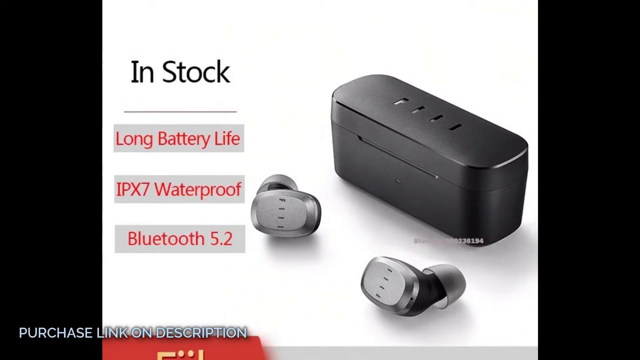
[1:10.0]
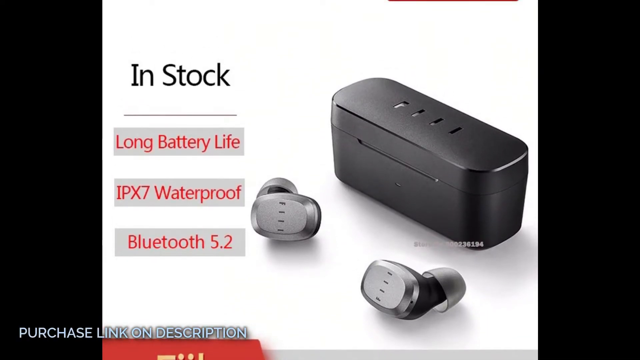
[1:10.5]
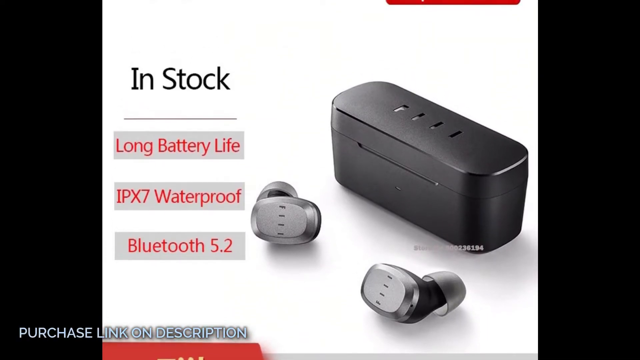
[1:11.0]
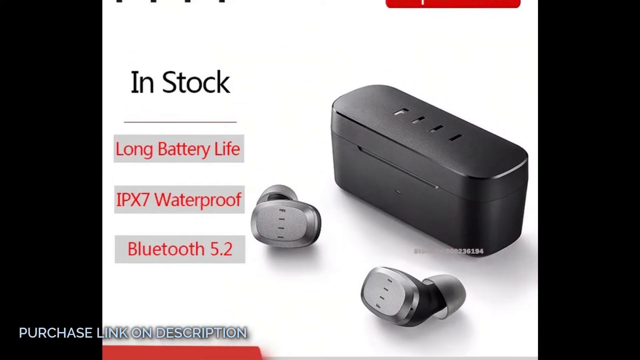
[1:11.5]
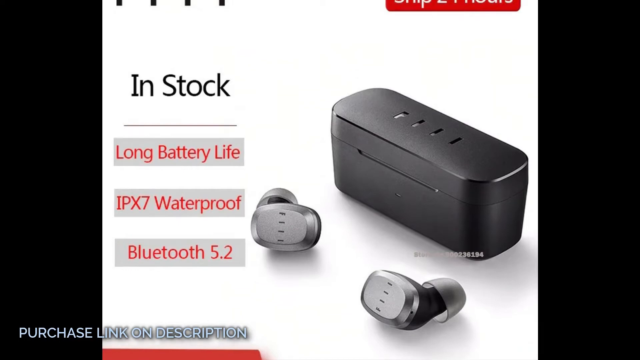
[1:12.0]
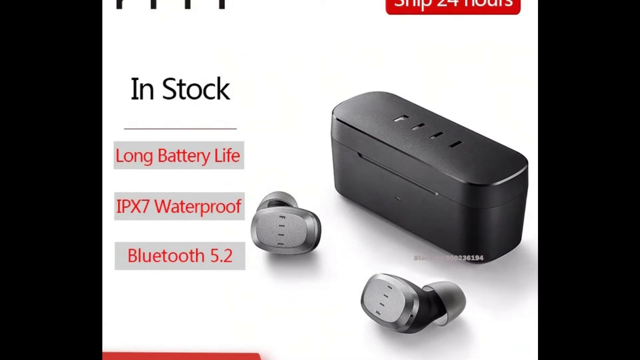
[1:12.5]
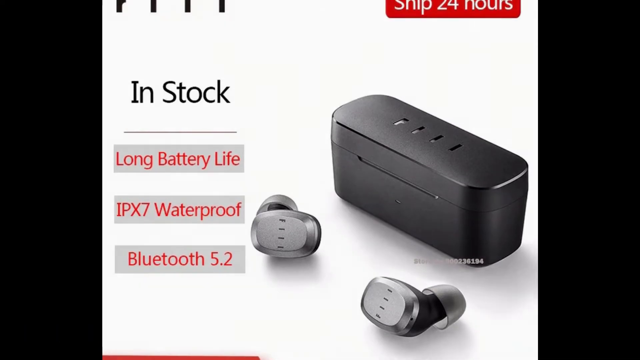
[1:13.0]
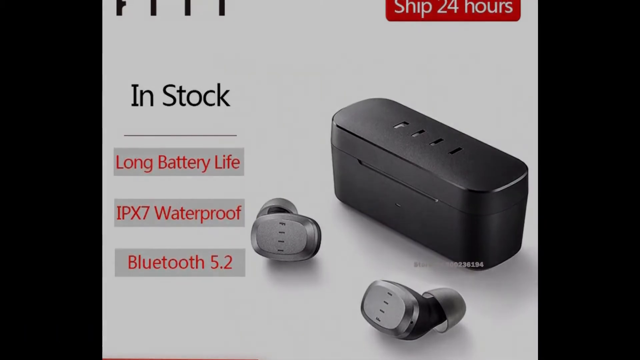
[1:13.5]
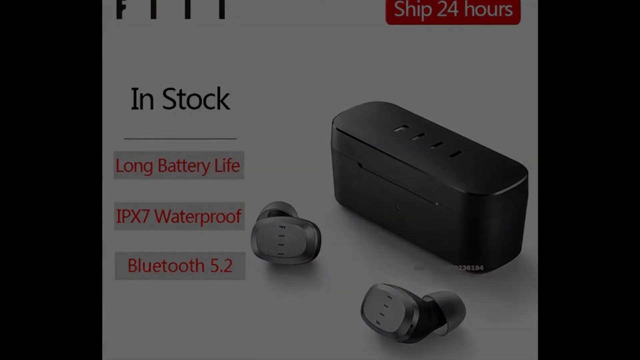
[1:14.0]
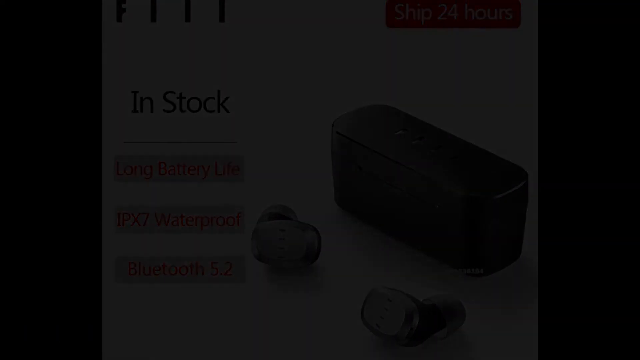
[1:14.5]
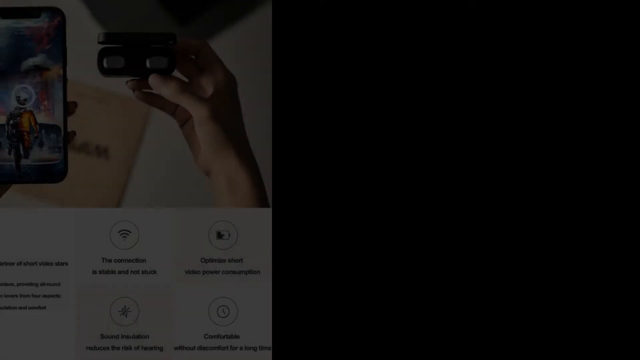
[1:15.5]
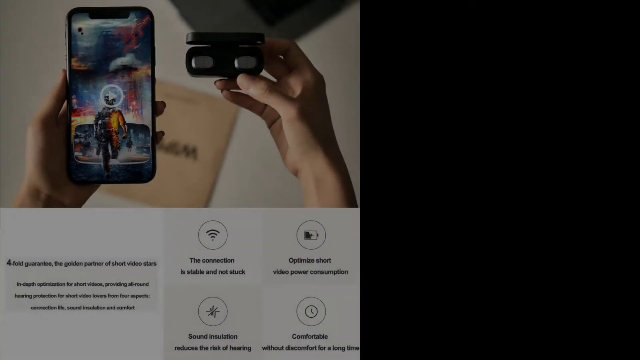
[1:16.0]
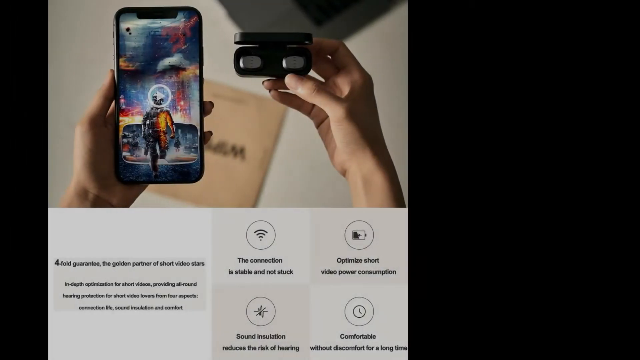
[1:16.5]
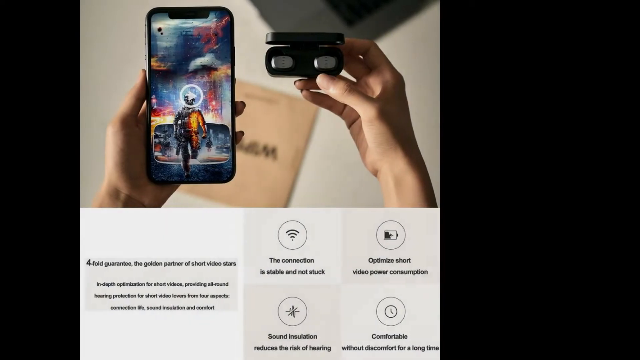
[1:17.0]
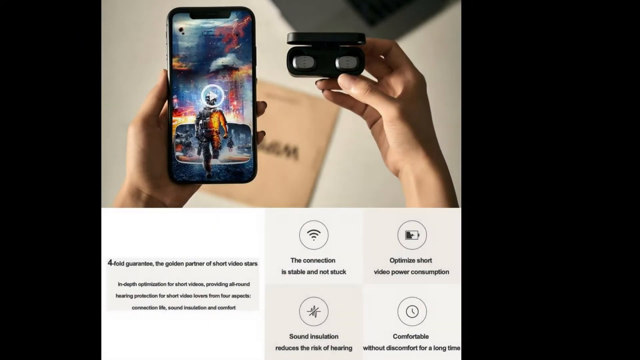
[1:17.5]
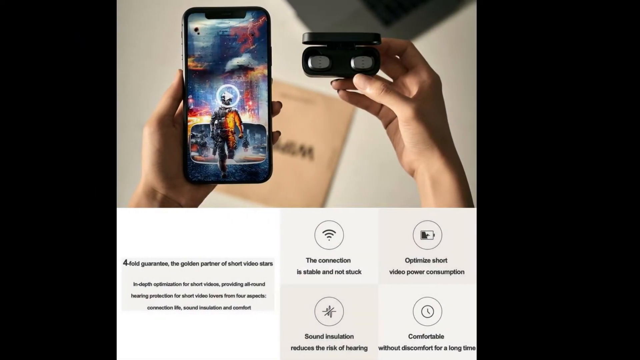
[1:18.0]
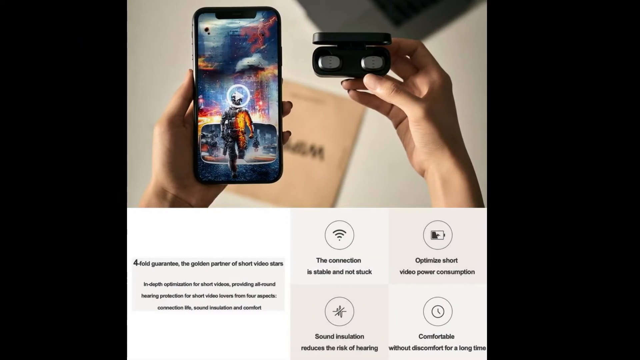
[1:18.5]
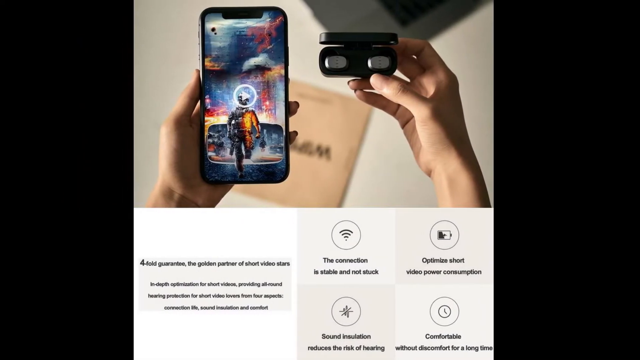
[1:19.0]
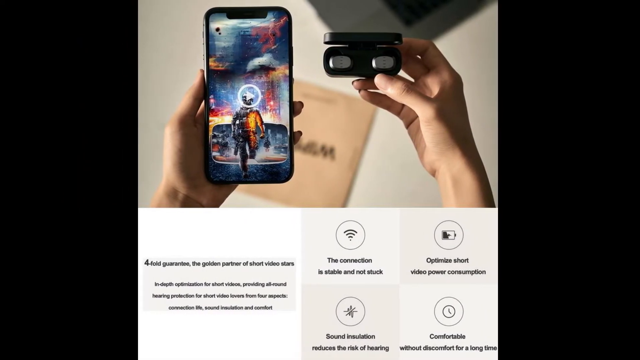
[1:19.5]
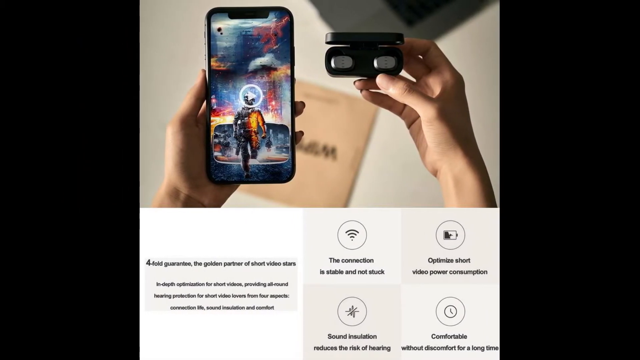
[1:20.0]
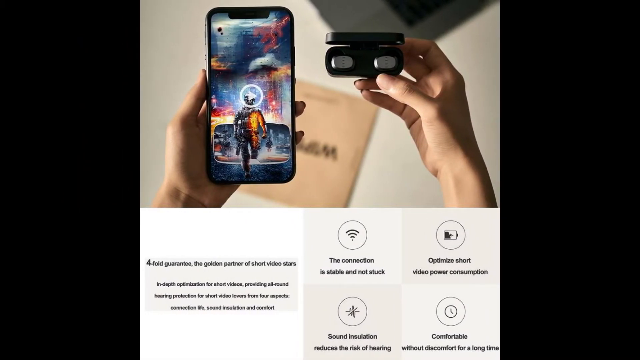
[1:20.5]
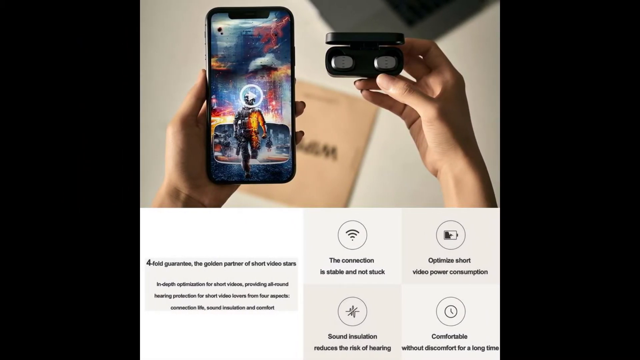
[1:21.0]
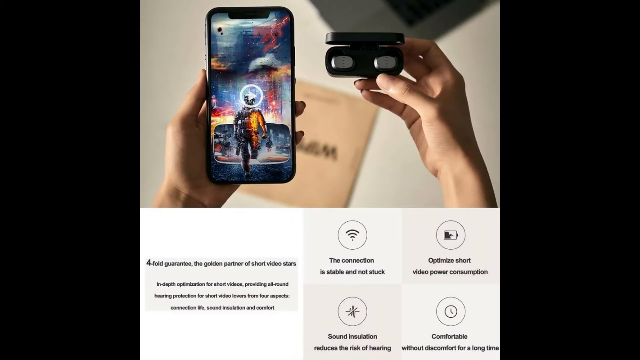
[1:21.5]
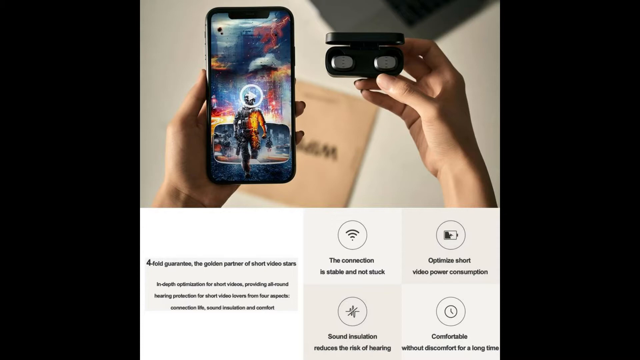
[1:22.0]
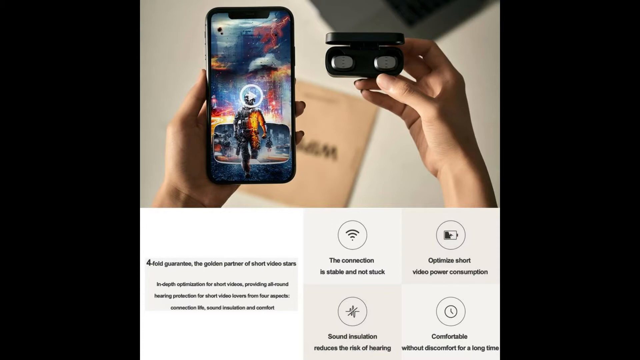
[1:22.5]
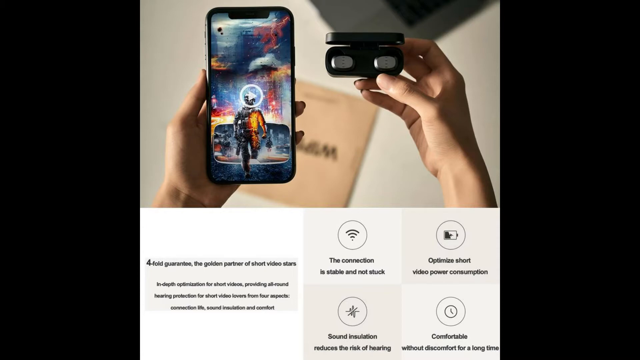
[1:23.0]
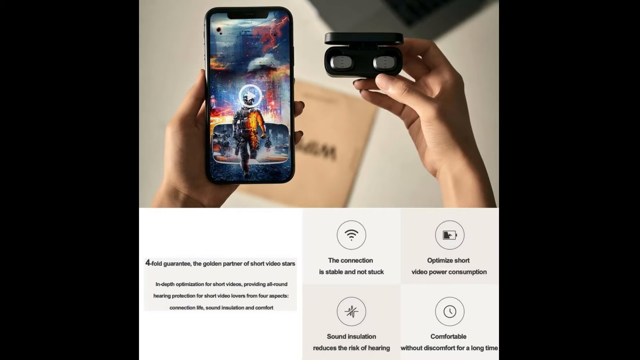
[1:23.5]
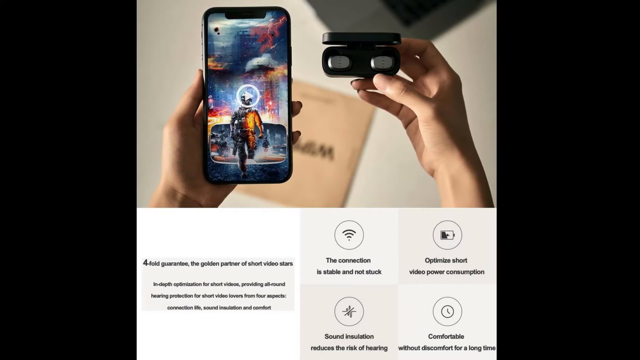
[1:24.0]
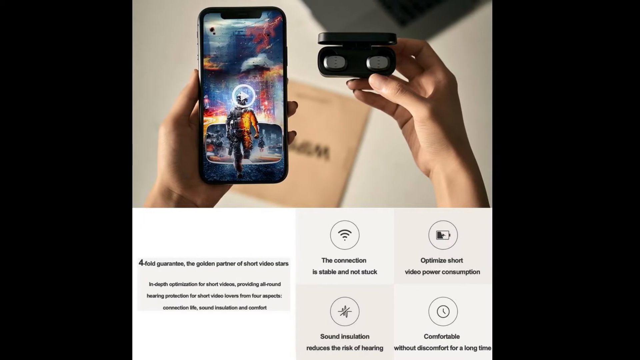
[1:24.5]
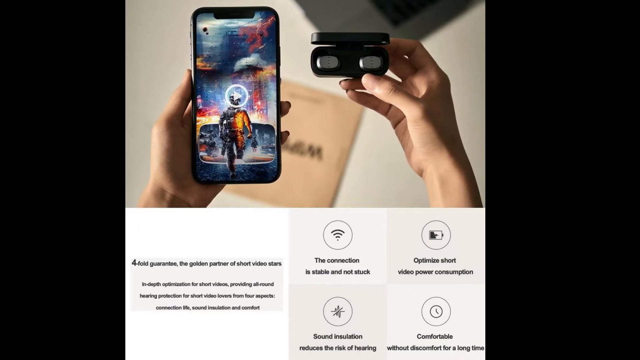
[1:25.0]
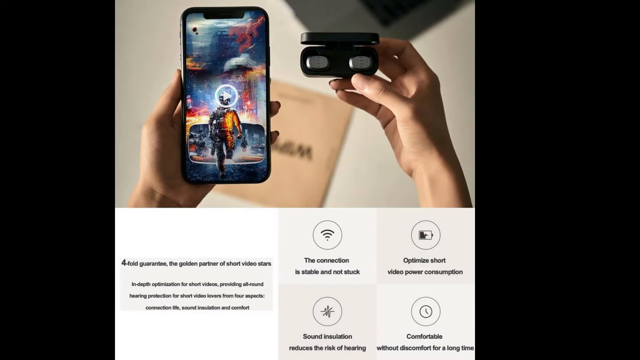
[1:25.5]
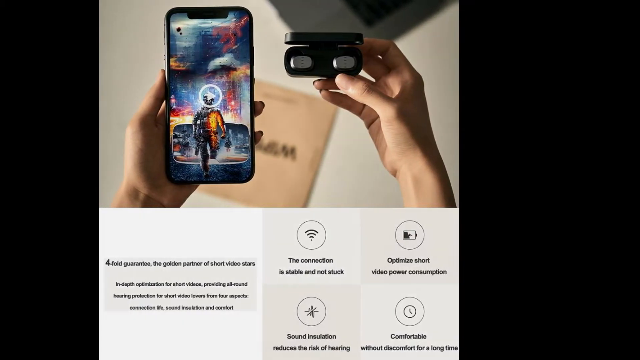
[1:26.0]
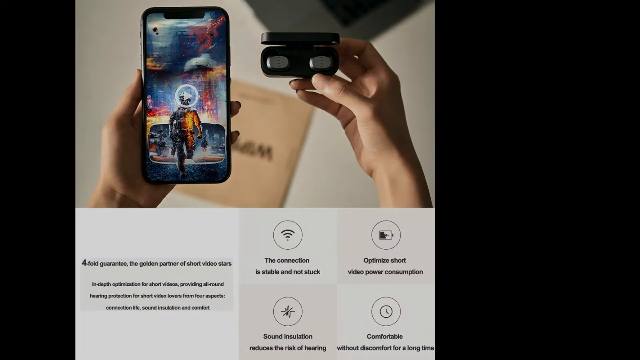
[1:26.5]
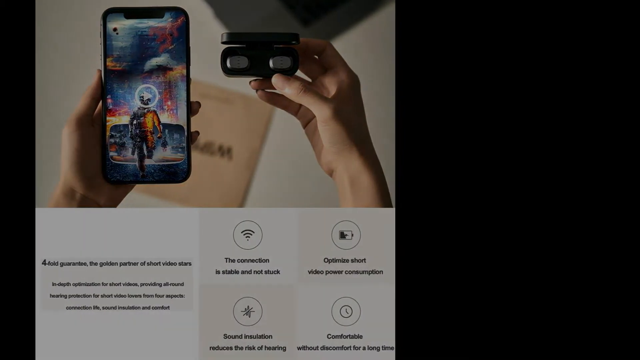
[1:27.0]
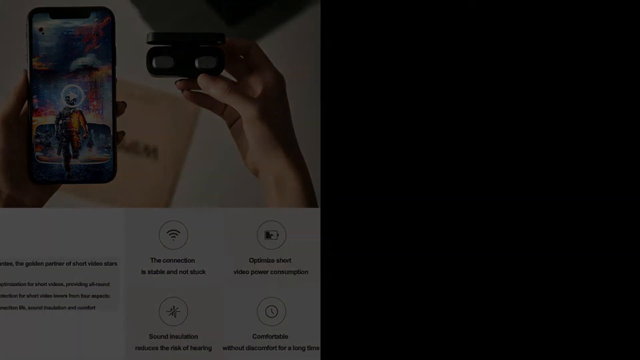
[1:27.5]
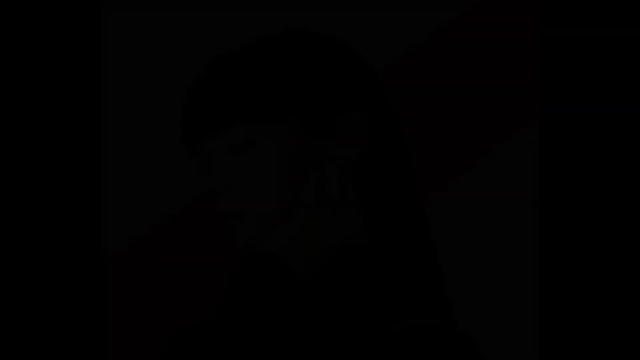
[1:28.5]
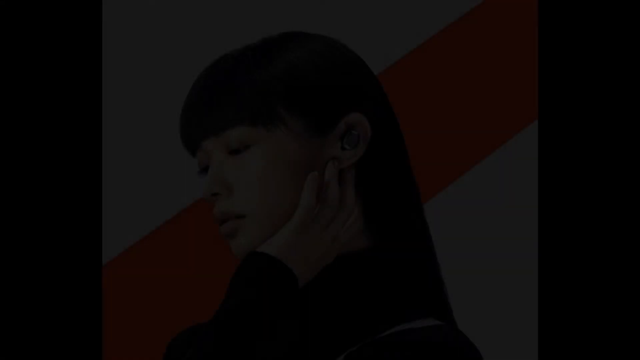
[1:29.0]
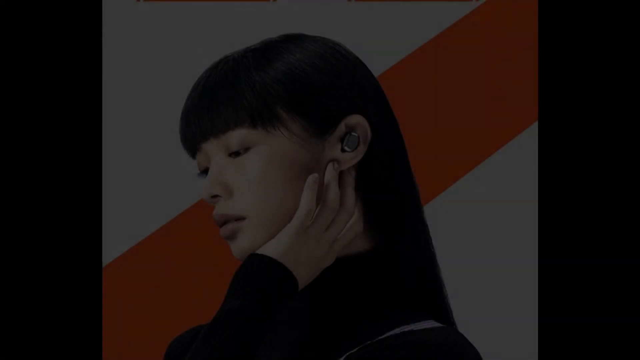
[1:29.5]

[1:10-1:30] The earbud advert continues with another image showing a woman holding a smartphone in her left hand, its screen showing an image of a firefighter, while in her right hand she holds the open carrying case for the earbuds. The text describes a fourfold guarantee that makes the buds the golden partner of short videos: a stable connection that does not get stuck, optimised short-video power consumption, sound insulation that reduces the risk of hearing problems, and comfort for long periods of use. This advert moves off to the left, and an image follows of a young East Asian woman with a bud in her left ear, holding her left hand up to it.